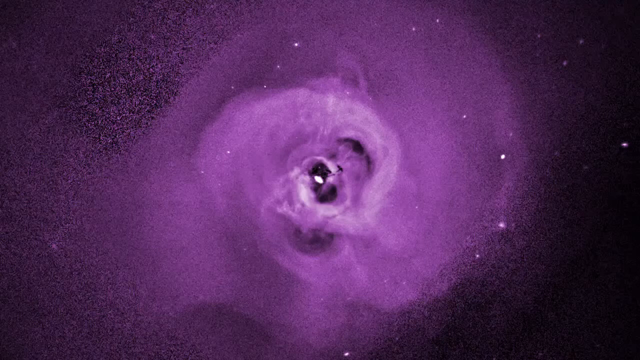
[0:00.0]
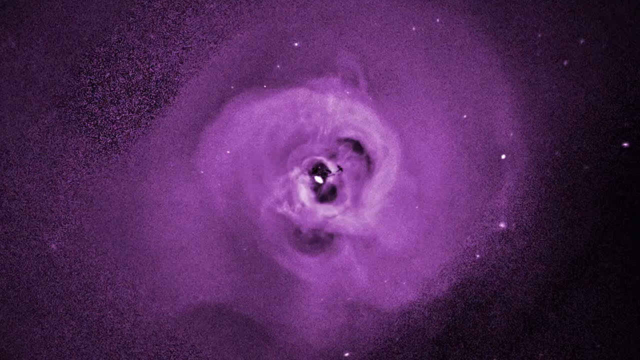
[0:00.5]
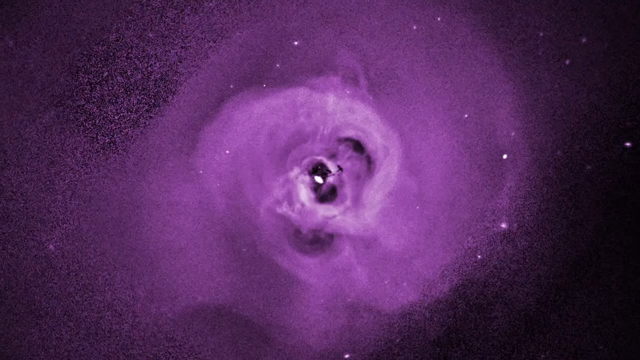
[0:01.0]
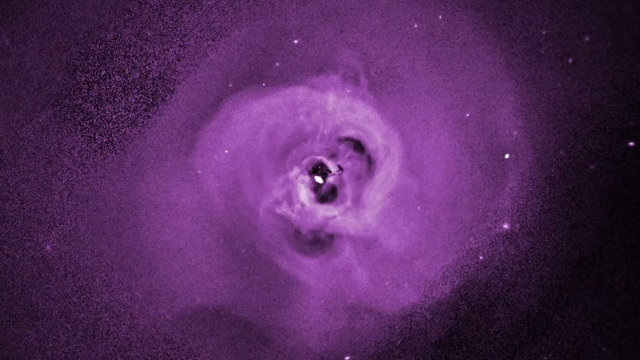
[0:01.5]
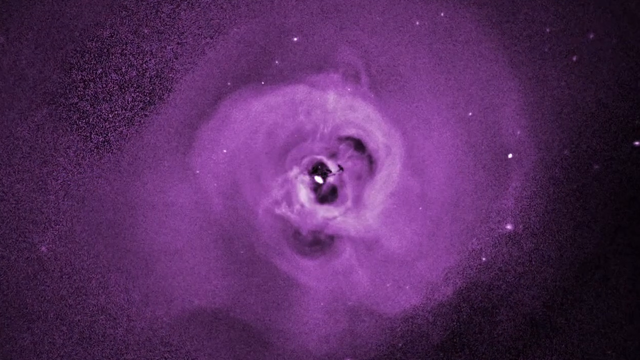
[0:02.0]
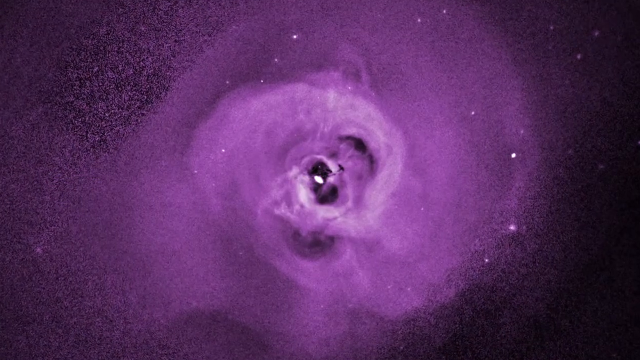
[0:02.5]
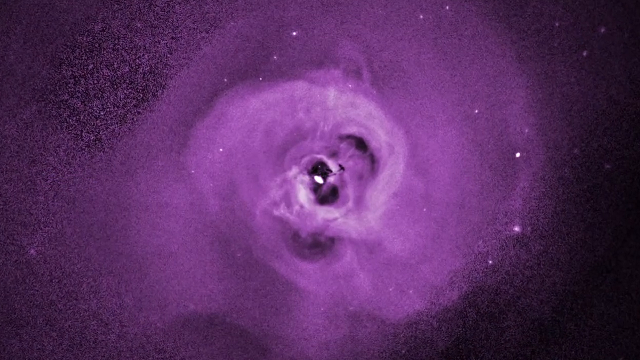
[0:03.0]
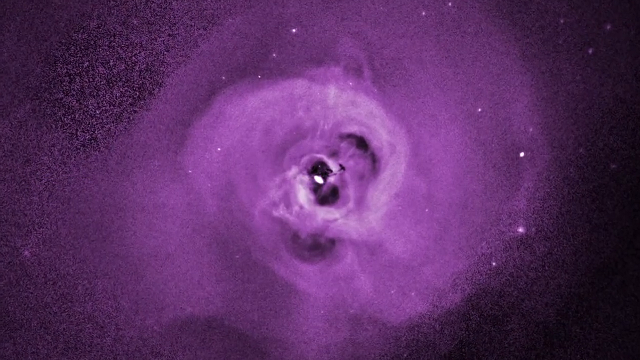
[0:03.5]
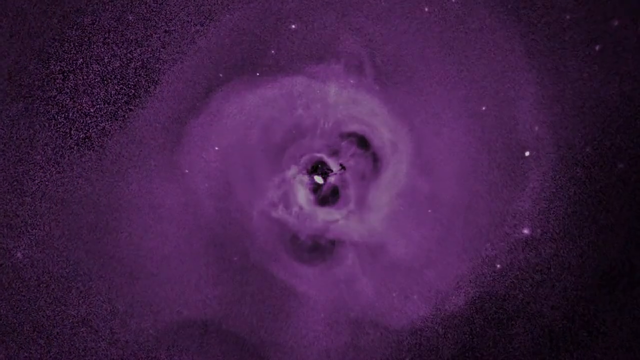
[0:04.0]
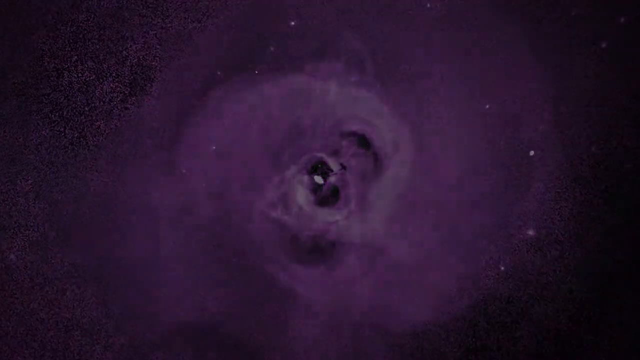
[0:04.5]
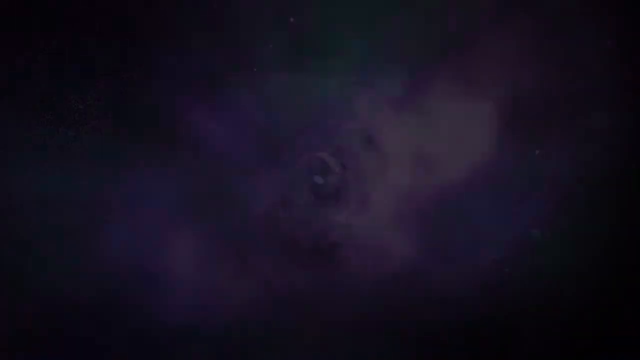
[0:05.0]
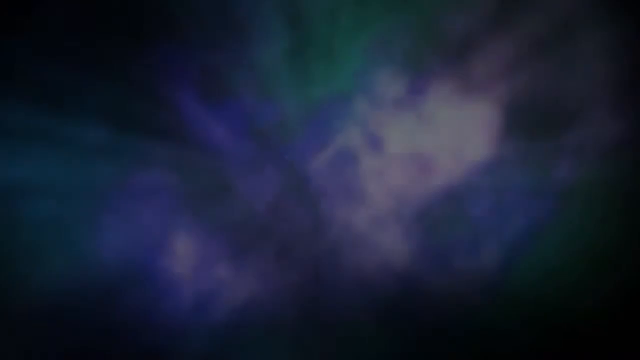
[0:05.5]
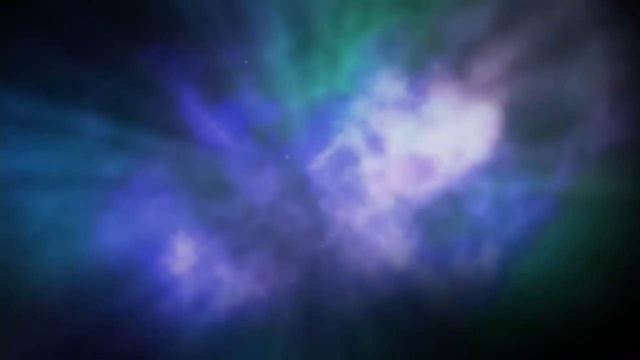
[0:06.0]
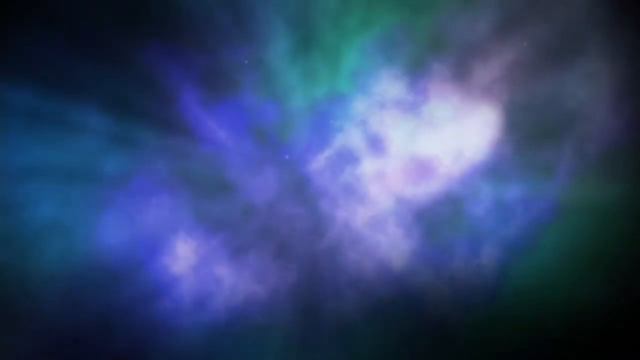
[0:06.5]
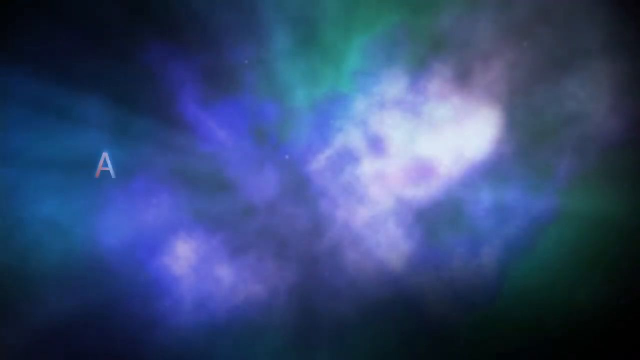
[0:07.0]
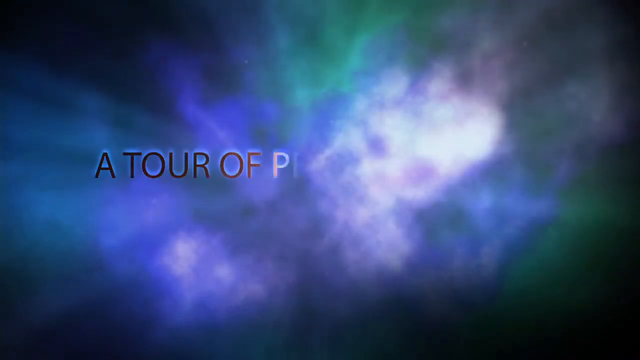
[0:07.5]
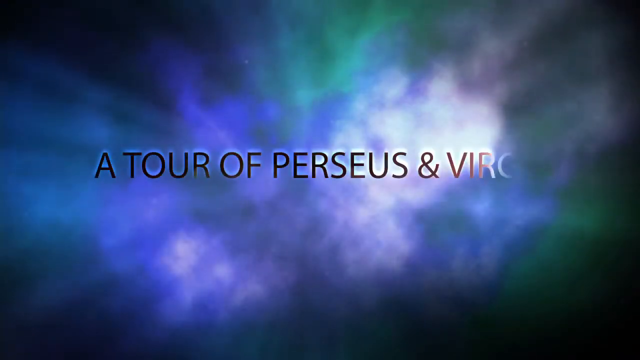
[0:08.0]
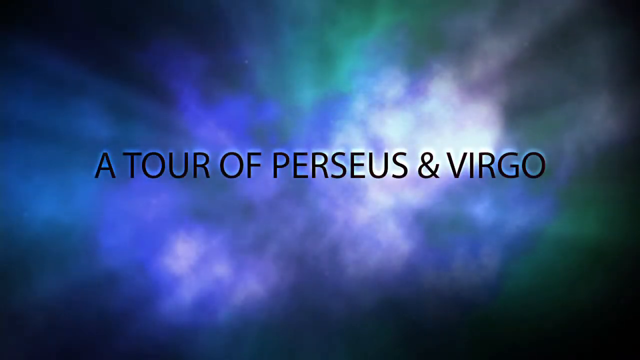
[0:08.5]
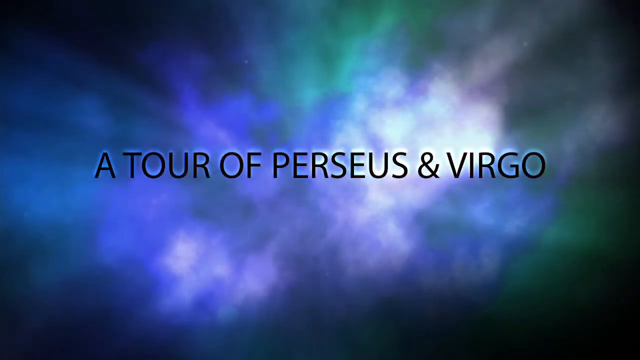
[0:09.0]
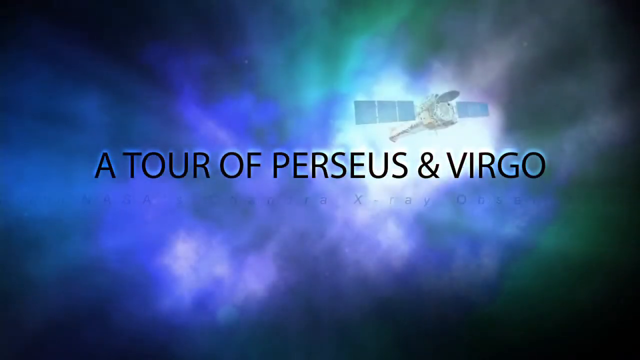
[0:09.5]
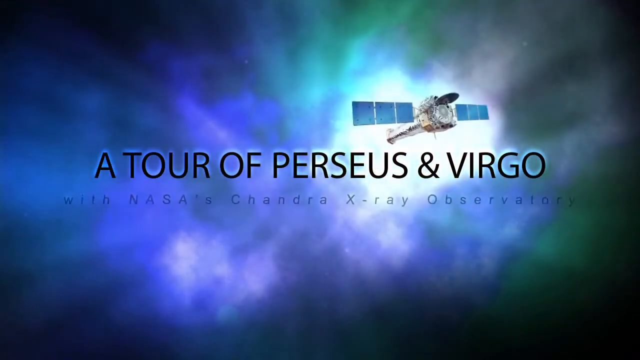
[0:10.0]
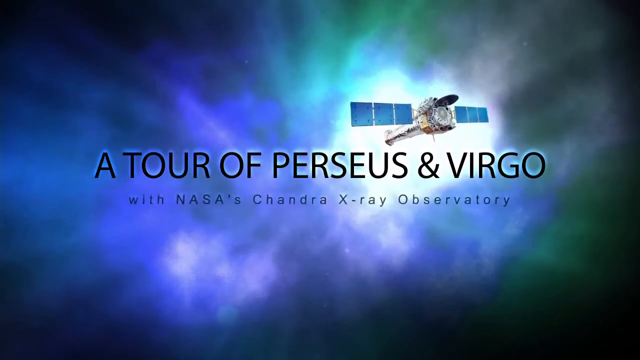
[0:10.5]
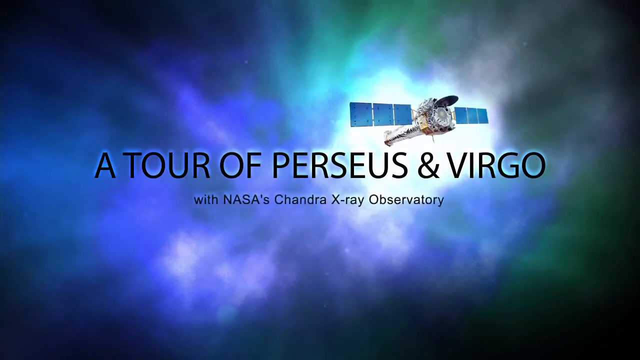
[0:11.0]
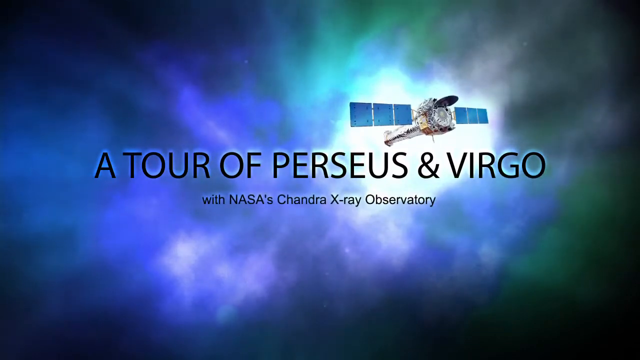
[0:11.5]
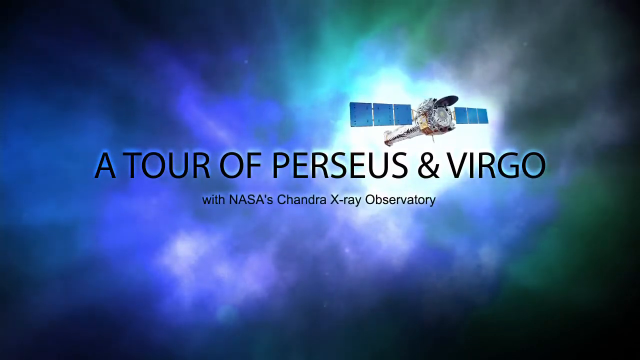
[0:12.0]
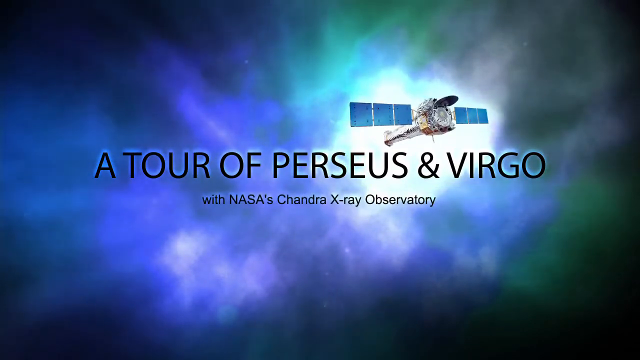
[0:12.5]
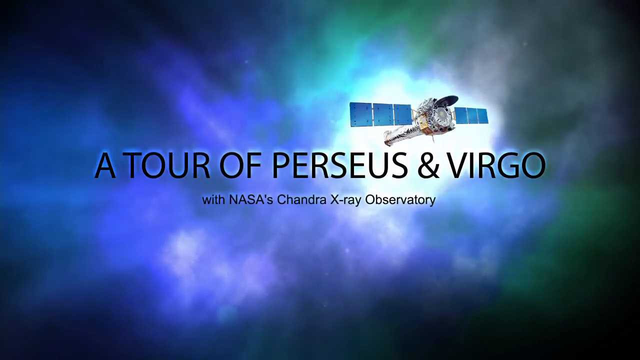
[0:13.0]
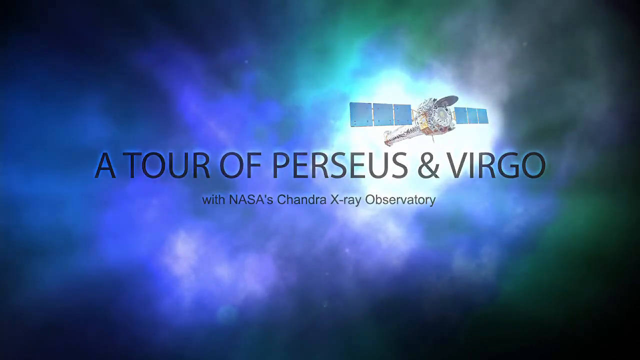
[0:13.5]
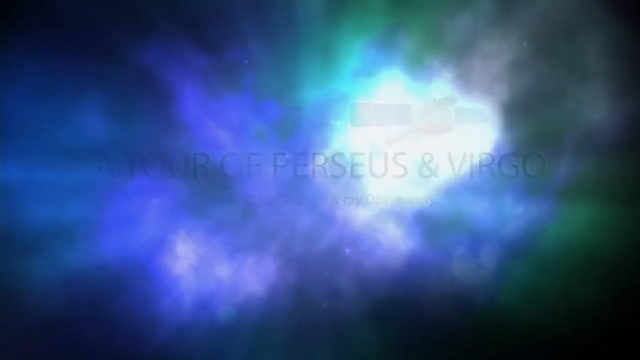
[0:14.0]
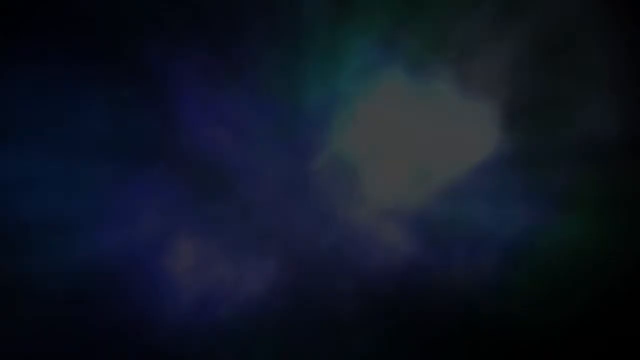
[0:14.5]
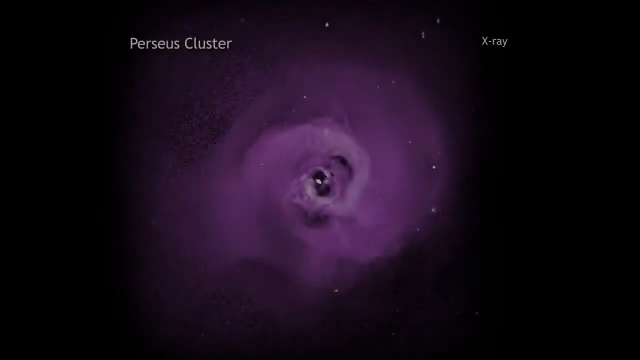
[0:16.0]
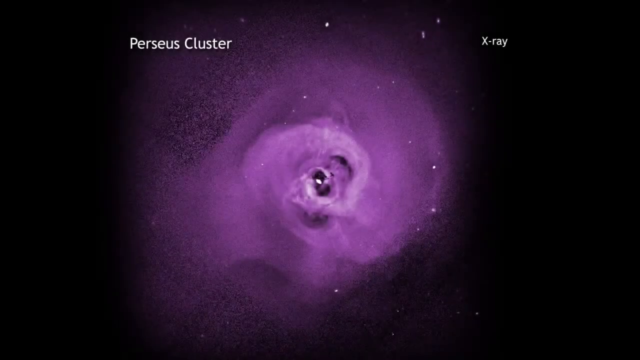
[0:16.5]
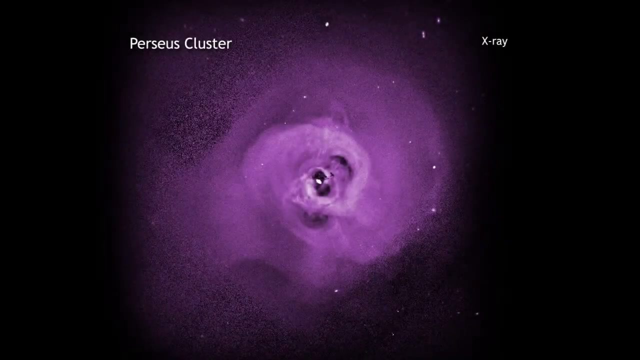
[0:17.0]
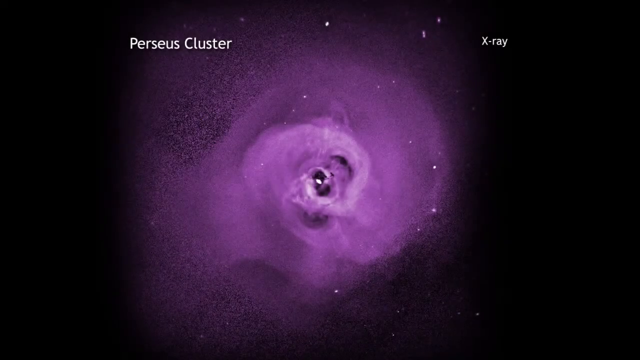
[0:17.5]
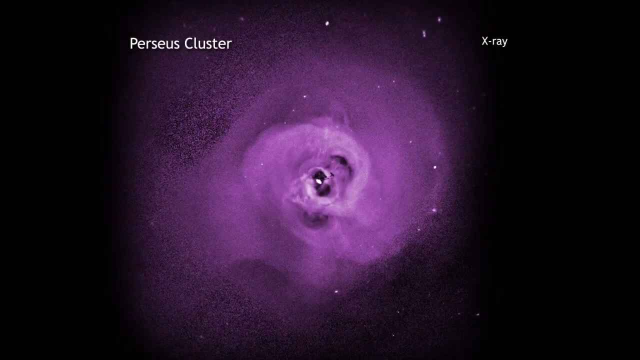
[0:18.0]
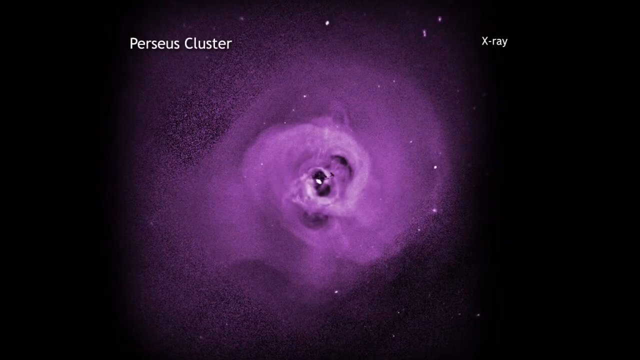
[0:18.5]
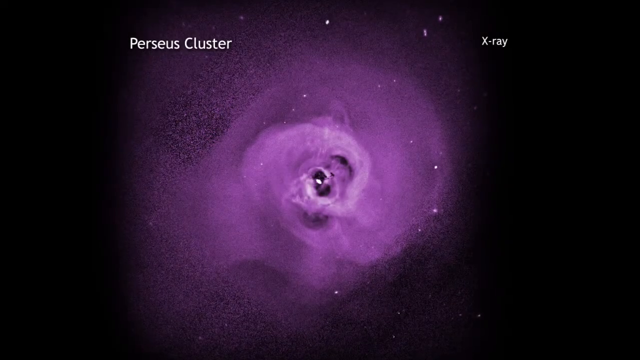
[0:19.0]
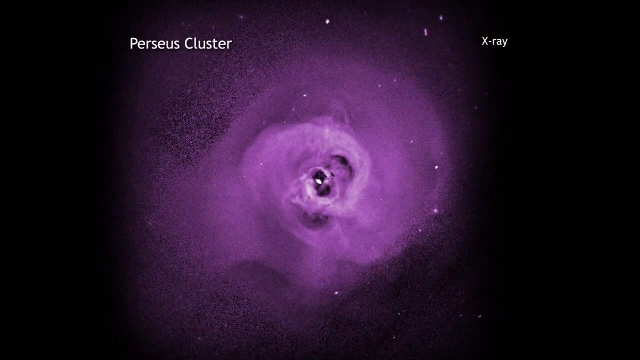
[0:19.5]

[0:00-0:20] The video opens on an image of a purple cluster. Its center is a darker purple and seems to overlap itself in different shades, with a whitish-purple band flowing into the center. Around the main part of the cluster, the purple fades into the black background, the dots getting smaller and dispersing wider until there is only black. Irregularly shaped white dots are scattered on top of the image. The image is zoomed in on very slowly before it fades to a black screen. An animation of what looks to be a blurred-out sky then appears with the text "a tour of Perseus and Virgo" on top. A satellite appears on the screen, and underneath it the text reads "with NASA's Chandra X-ray observatory".